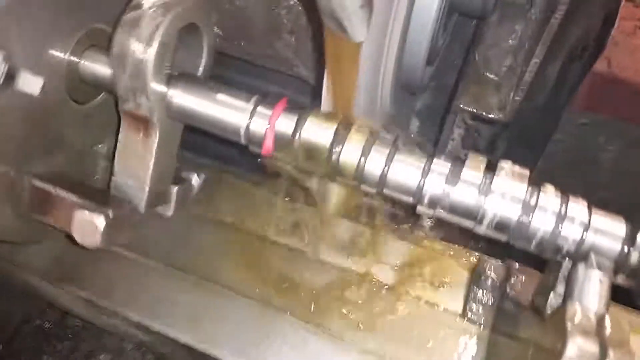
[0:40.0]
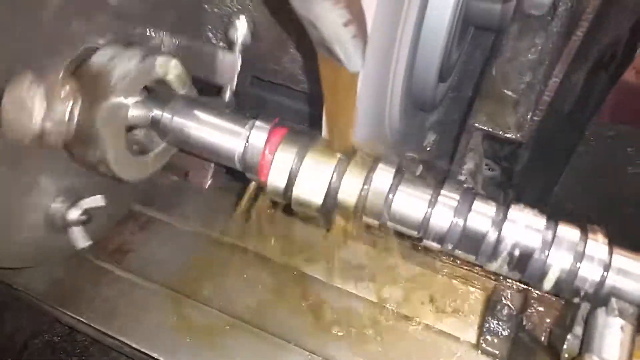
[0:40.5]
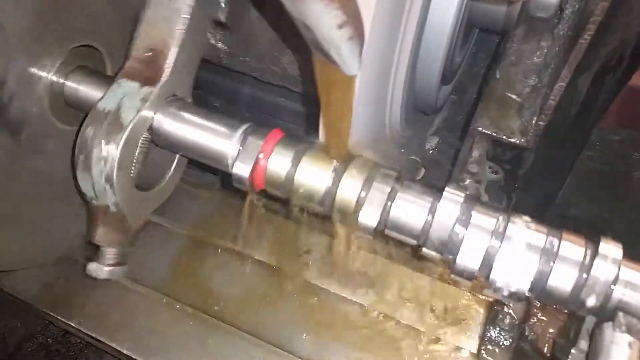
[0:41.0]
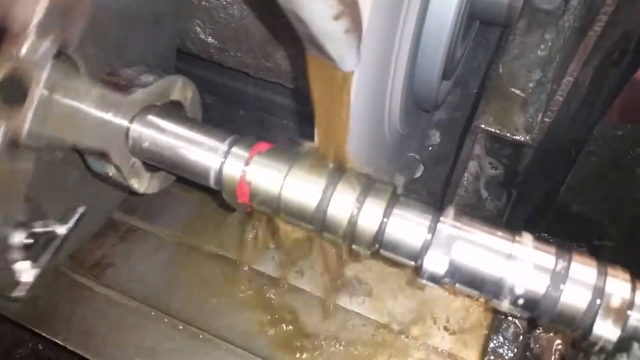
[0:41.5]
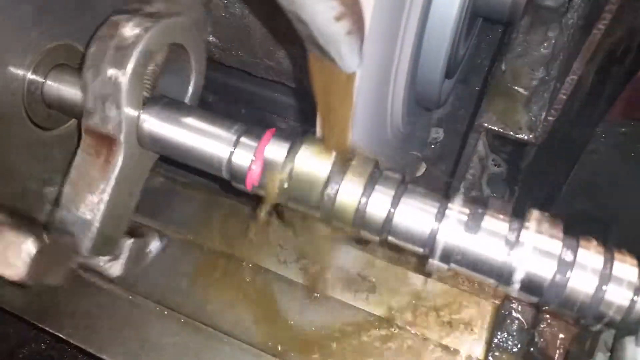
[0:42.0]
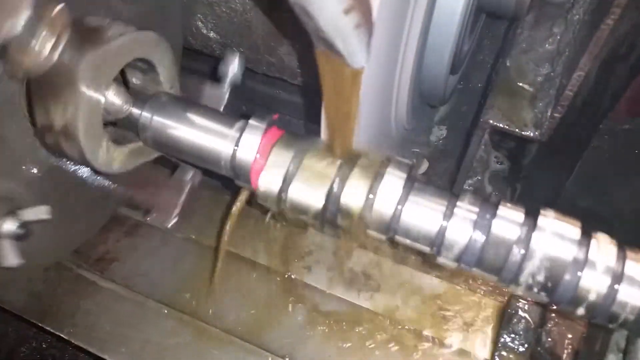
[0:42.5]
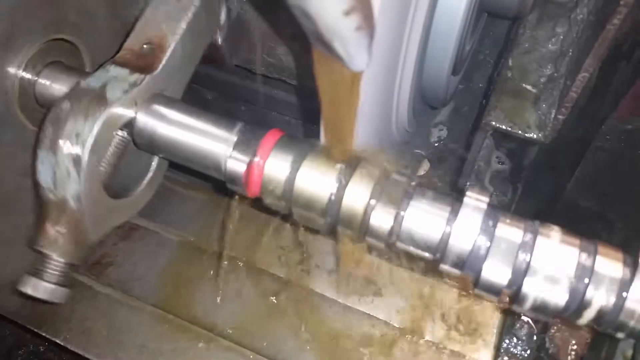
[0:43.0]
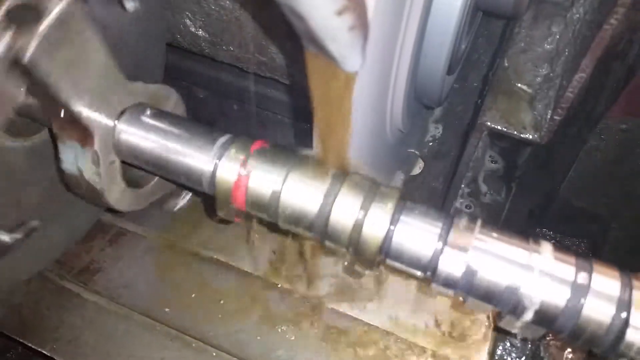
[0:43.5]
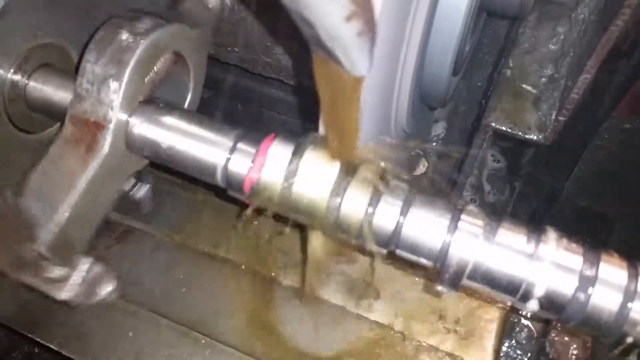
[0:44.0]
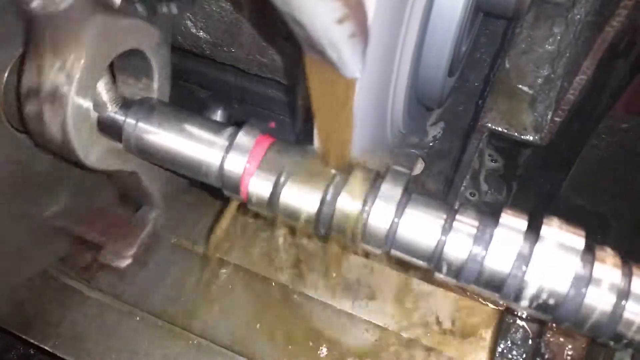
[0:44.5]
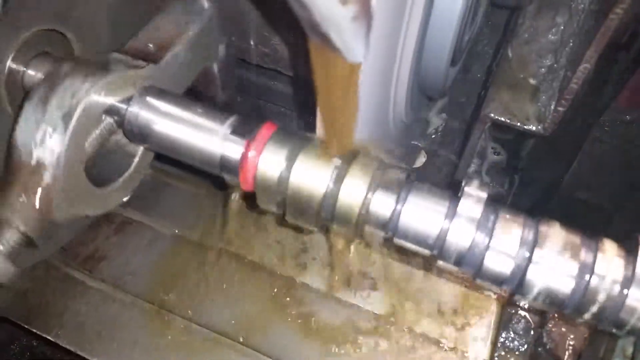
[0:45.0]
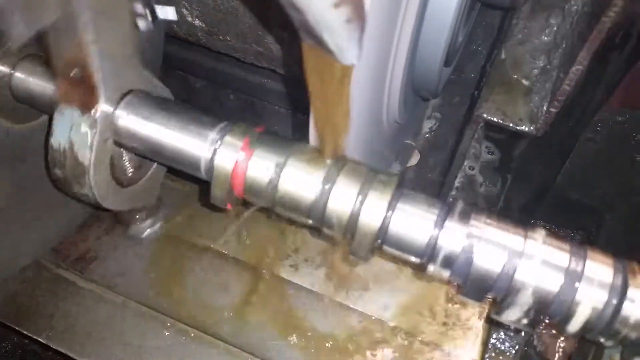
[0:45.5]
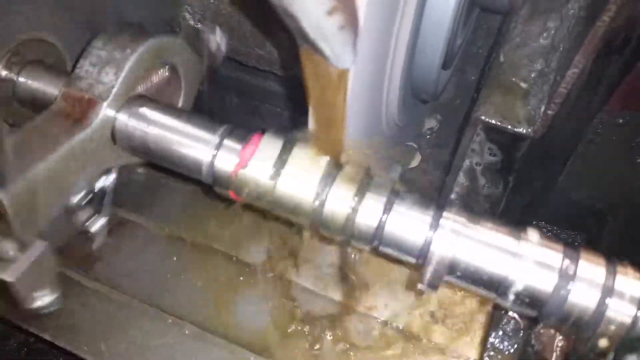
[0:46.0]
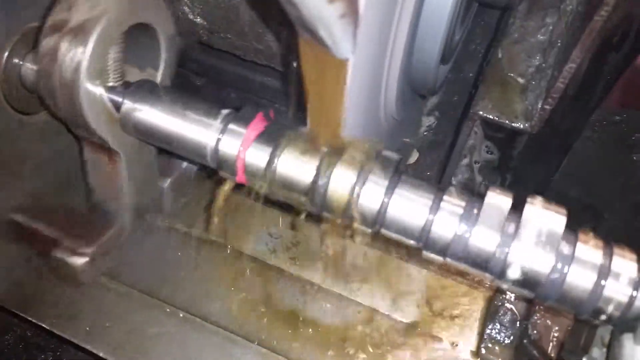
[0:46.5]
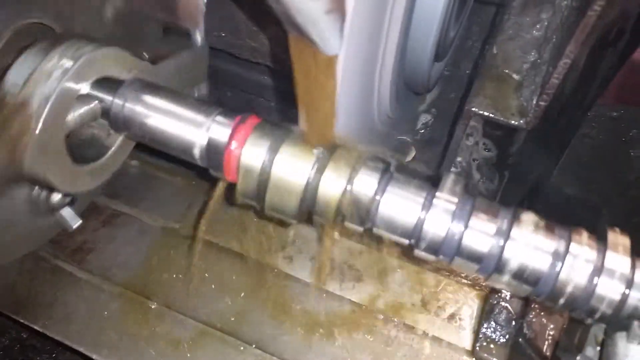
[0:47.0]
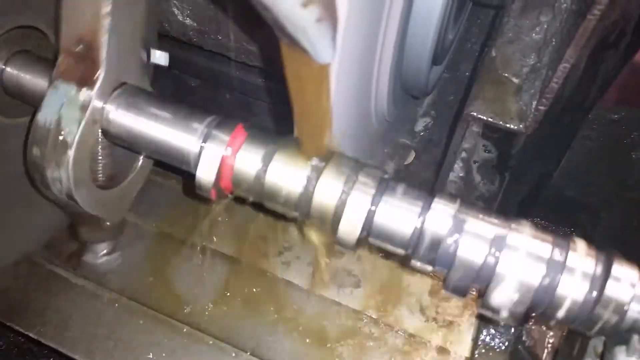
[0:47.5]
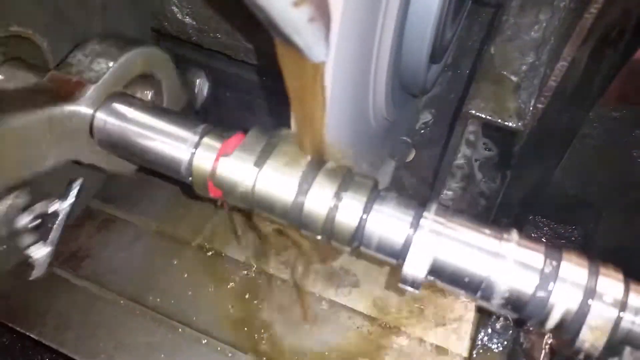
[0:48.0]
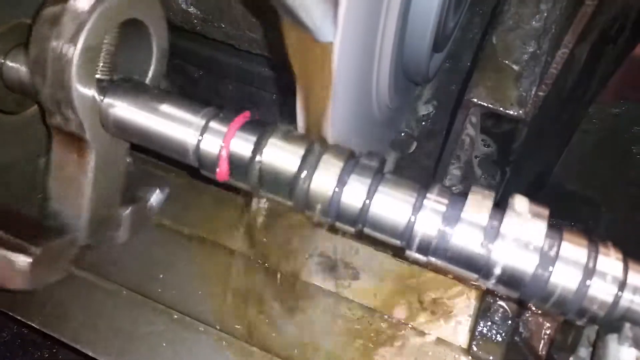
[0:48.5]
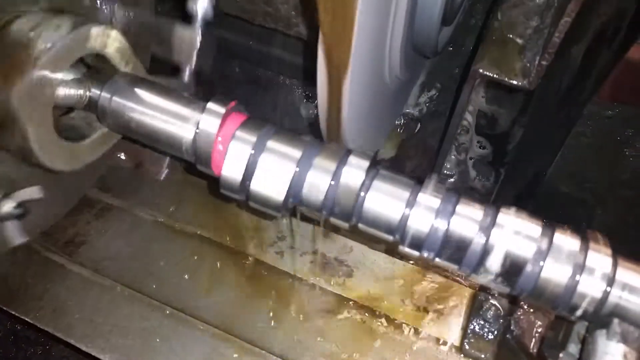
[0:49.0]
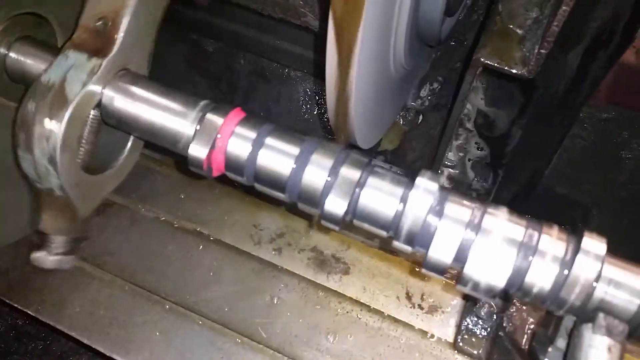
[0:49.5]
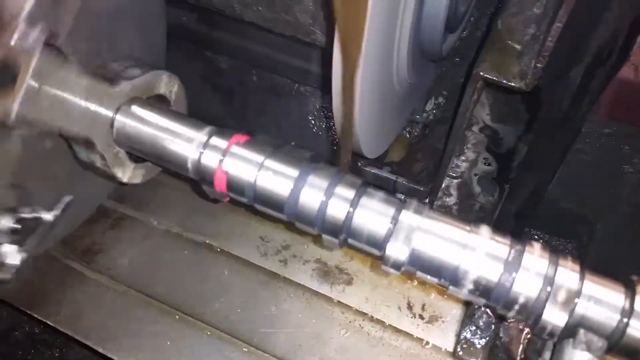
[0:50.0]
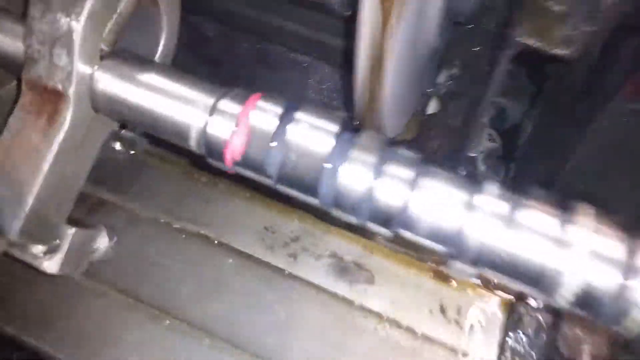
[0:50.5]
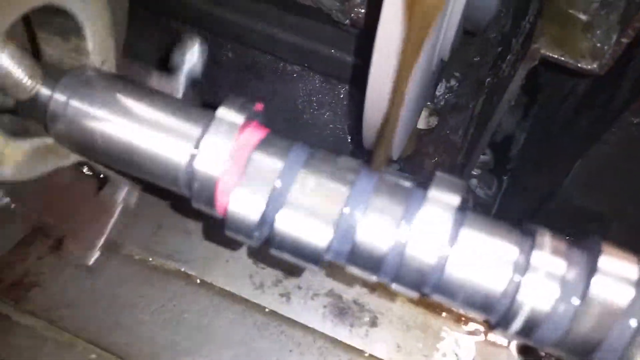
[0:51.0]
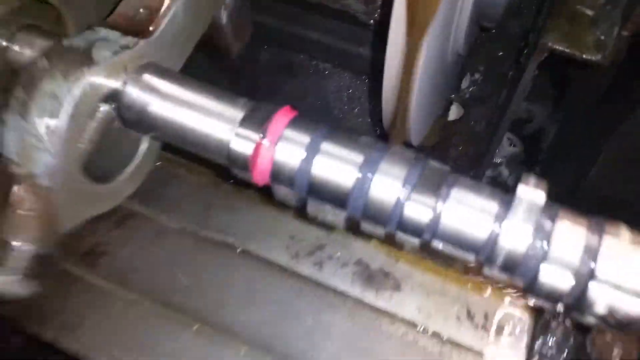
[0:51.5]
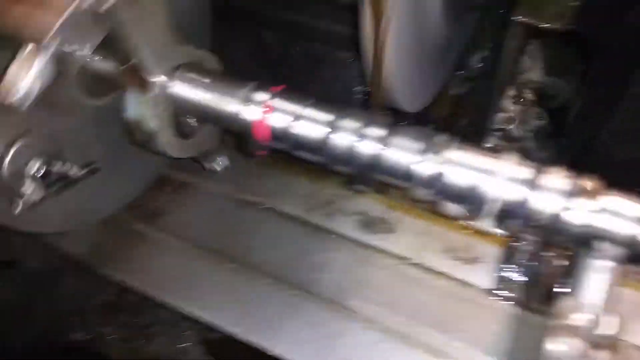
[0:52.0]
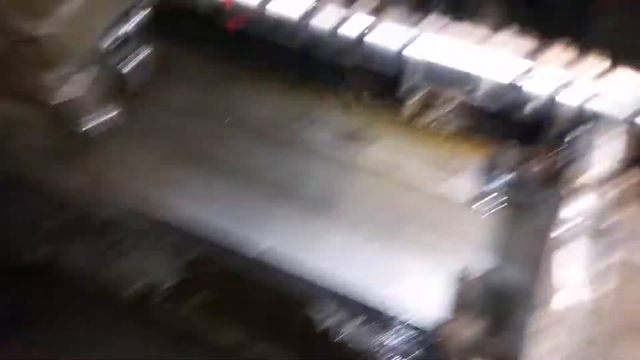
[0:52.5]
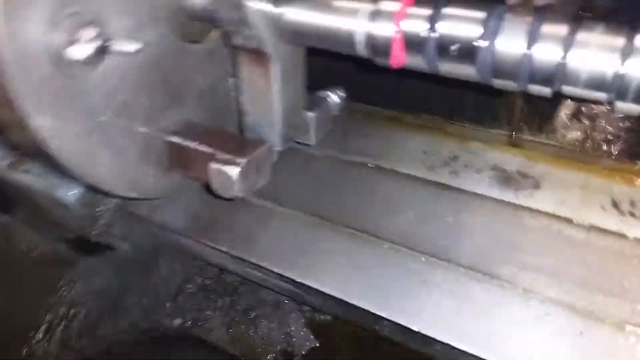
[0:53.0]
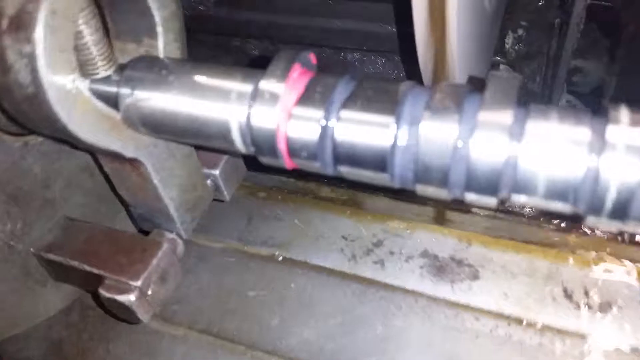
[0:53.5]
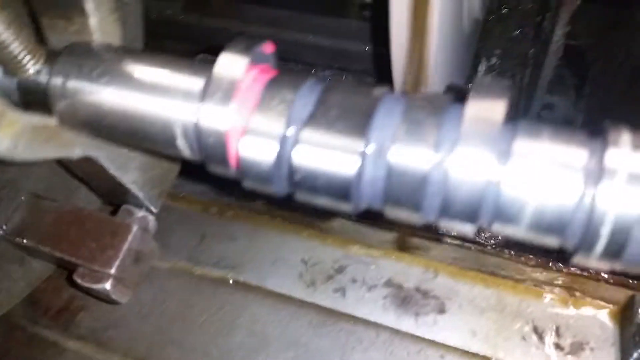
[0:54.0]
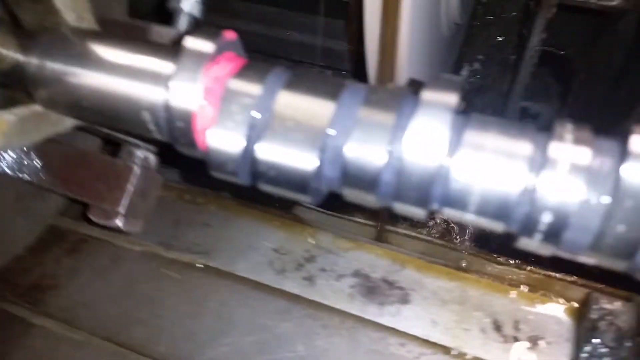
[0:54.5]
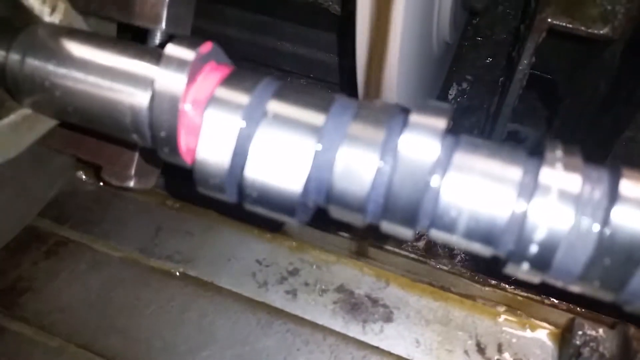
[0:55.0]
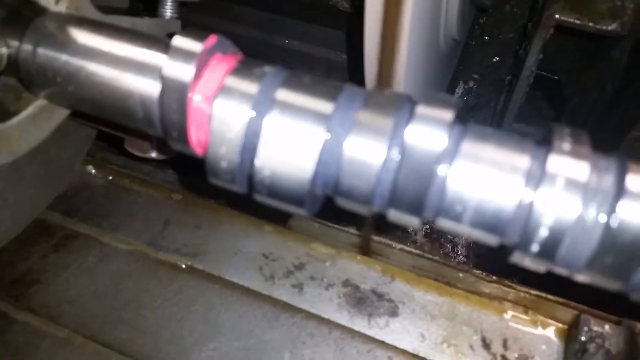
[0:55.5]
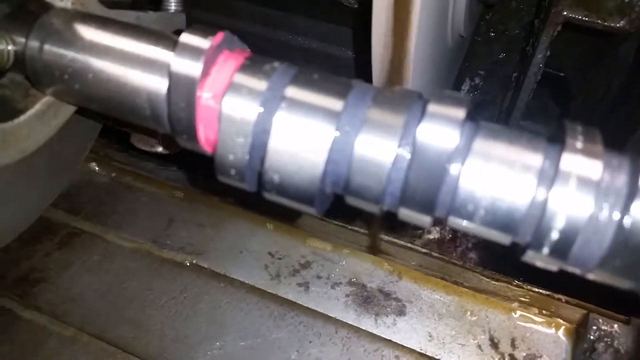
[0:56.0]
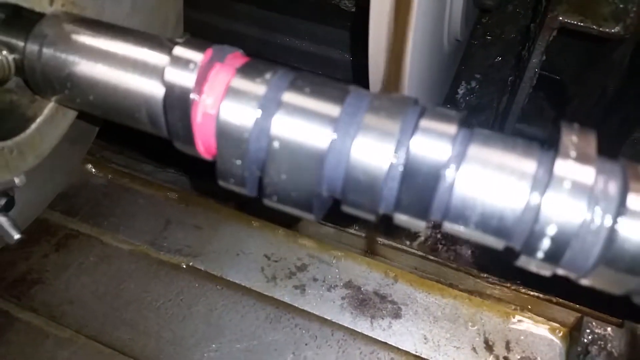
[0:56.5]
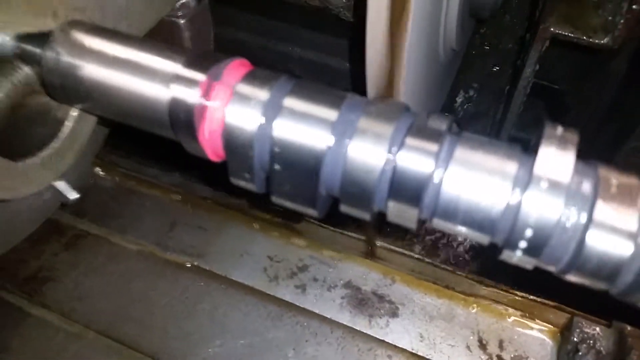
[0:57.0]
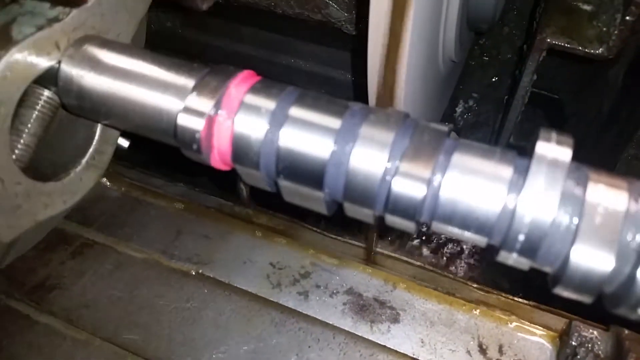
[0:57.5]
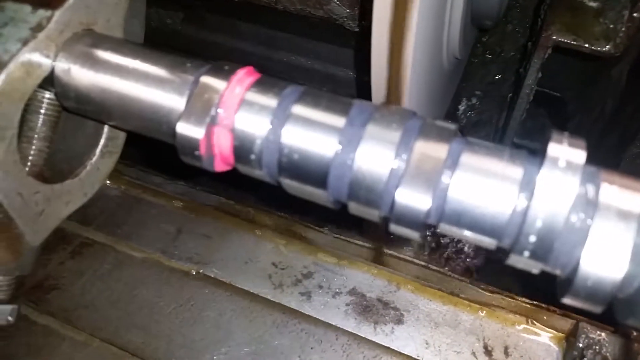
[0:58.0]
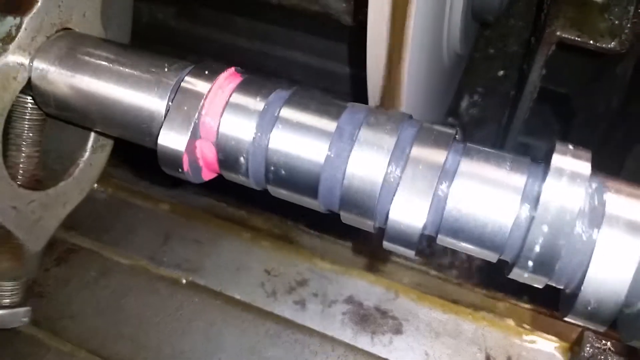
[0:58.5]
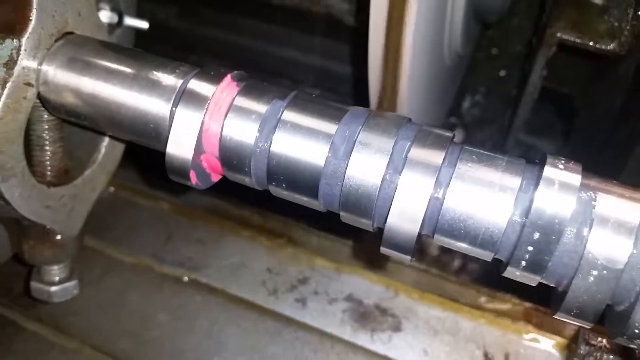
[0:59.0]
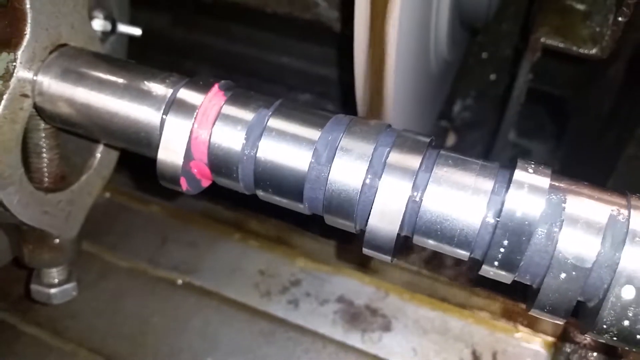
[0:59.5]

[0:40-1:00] The machine, which was very dirty, now looks clean. A liquid, possibly oil, is being poured on it. The machine is working, and its movement is visible.